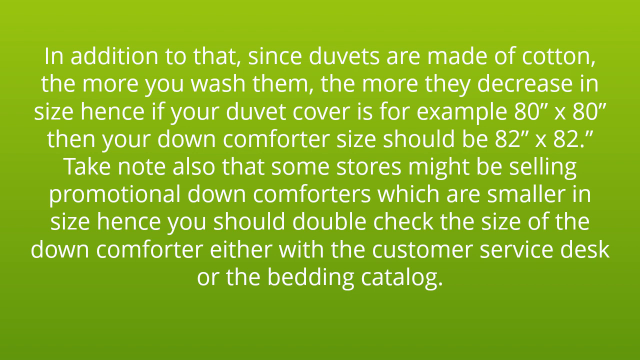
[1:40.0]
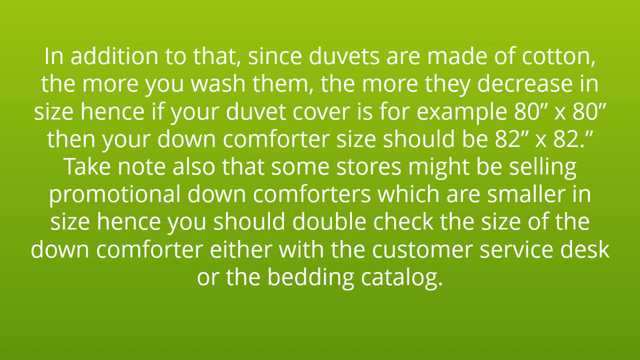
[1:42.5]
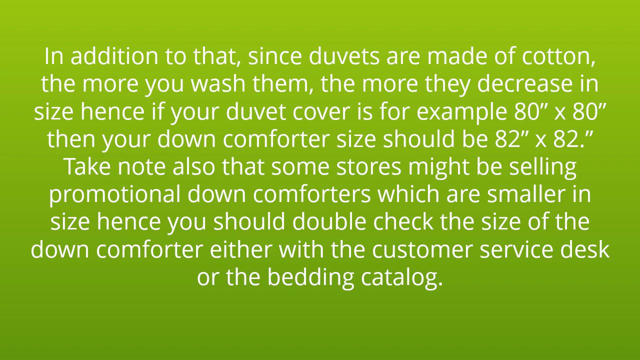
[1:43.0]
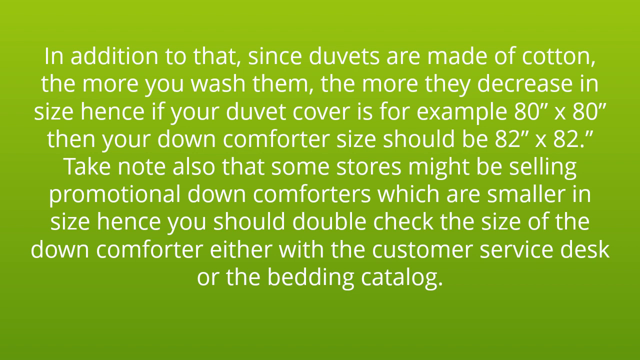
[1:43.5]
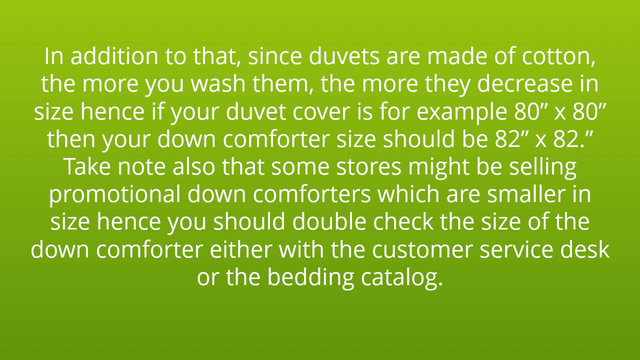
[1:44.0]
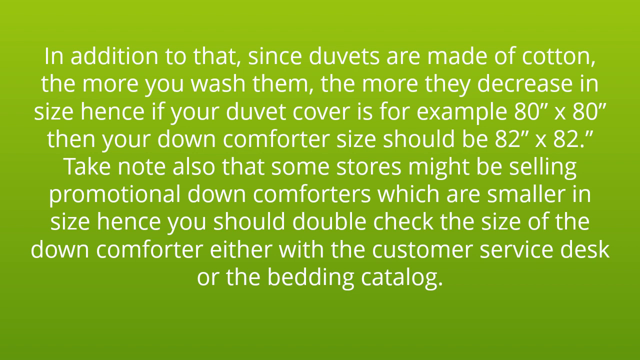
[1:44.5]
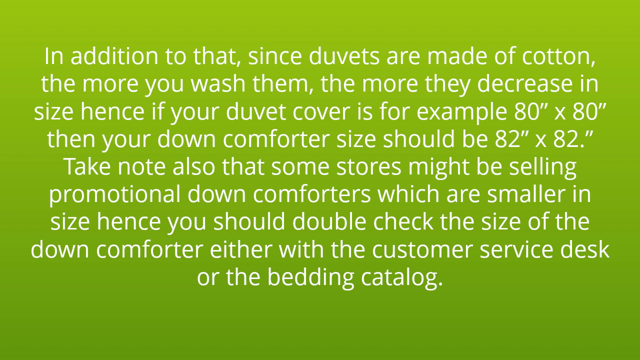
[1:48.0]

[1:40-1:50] Each slide of the down comforter ad is green with white writing. The slide reads: "In addition to that, since duvets are made of cotton, the more that you wash them, the more they decrease in size. If your duvet cover is, for example, 80 inches times 80 inches, then your down comforter size should be 82 by 82. Take note also that some stores might be selling promotional down comforters, which are smaller in size, hence you should double check the size of the down comforter, either with the customer service desk or the bedding catalog."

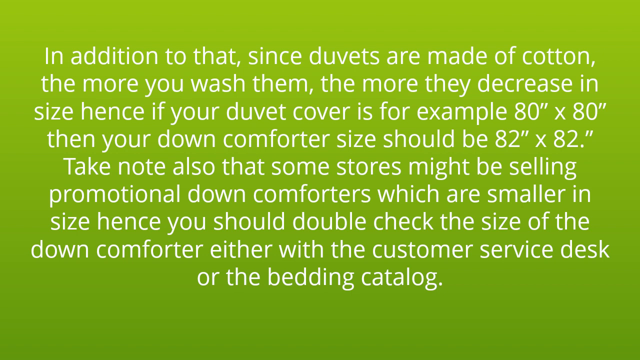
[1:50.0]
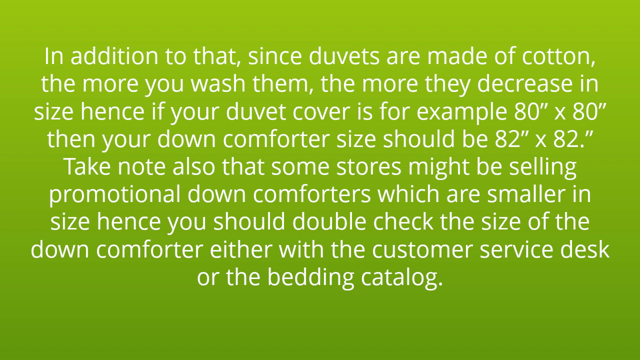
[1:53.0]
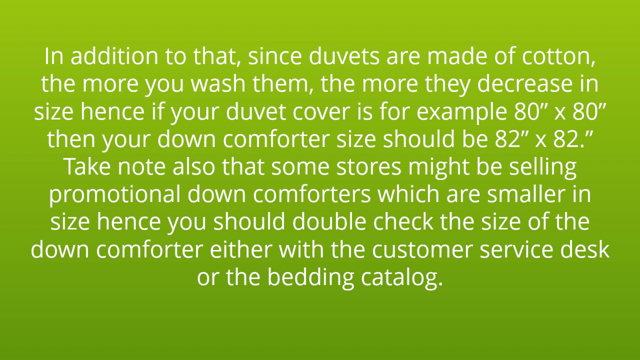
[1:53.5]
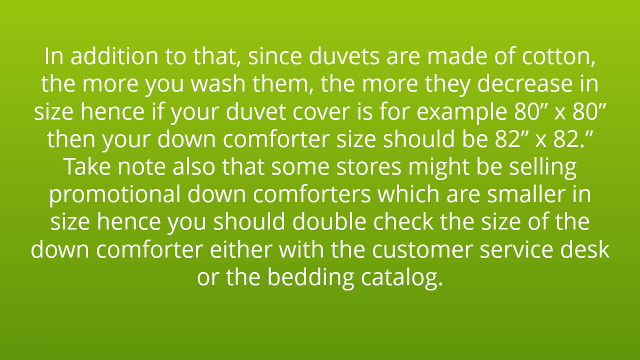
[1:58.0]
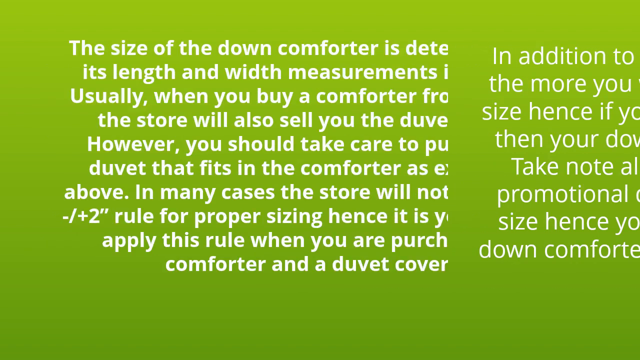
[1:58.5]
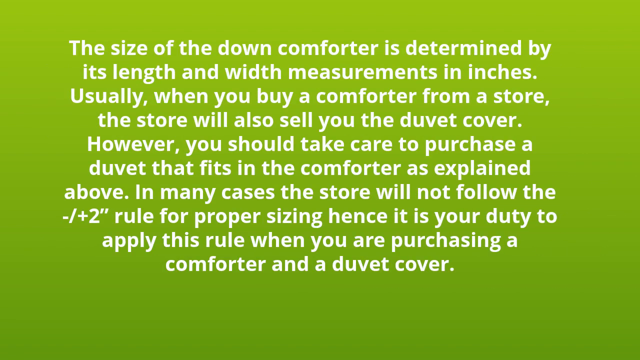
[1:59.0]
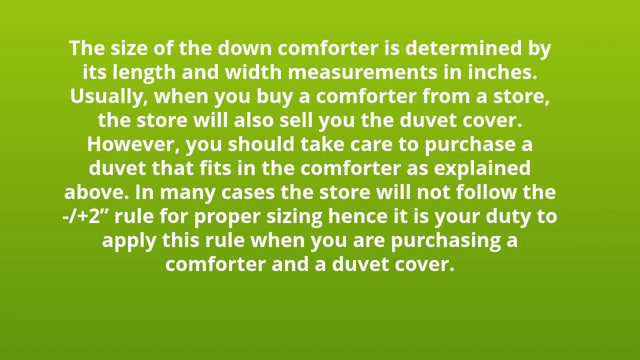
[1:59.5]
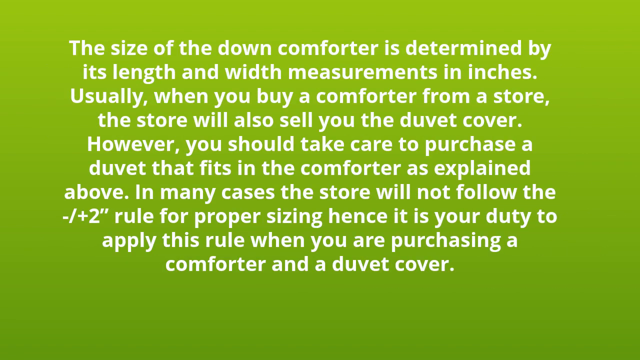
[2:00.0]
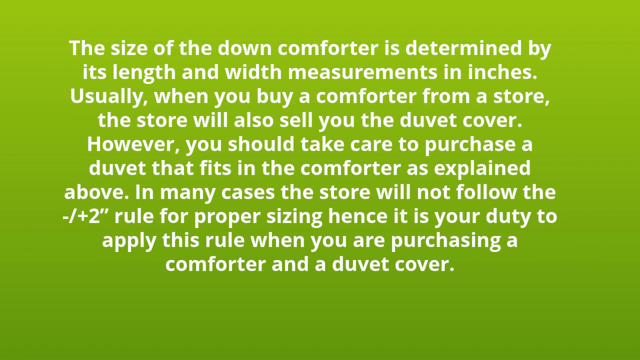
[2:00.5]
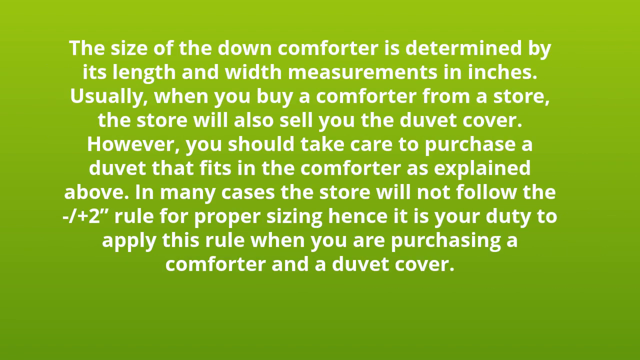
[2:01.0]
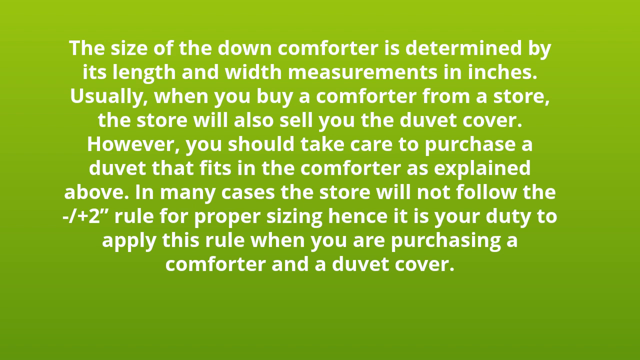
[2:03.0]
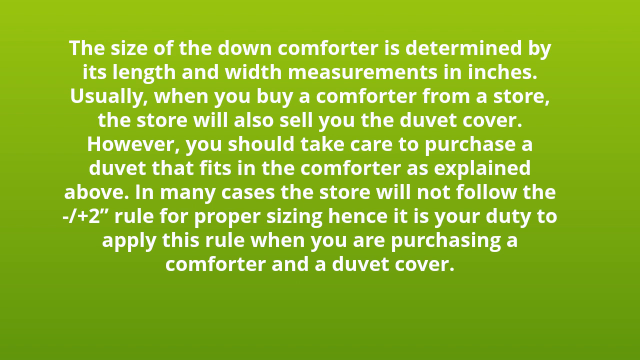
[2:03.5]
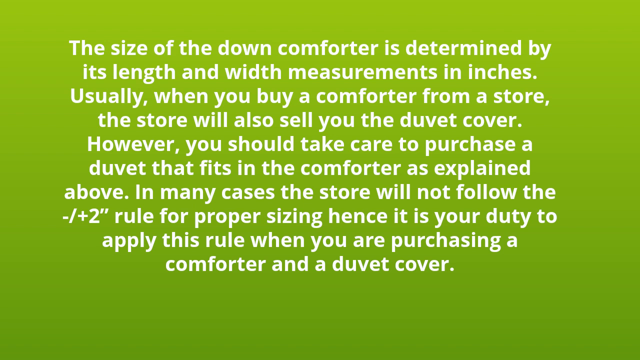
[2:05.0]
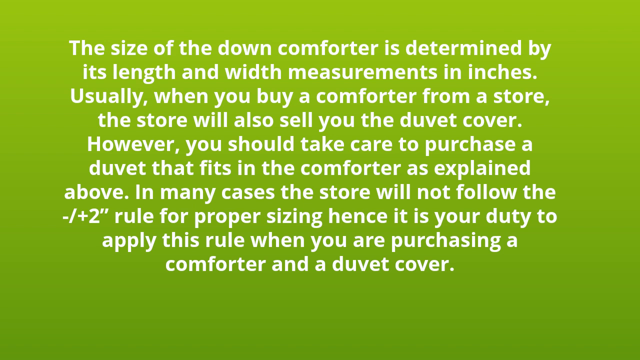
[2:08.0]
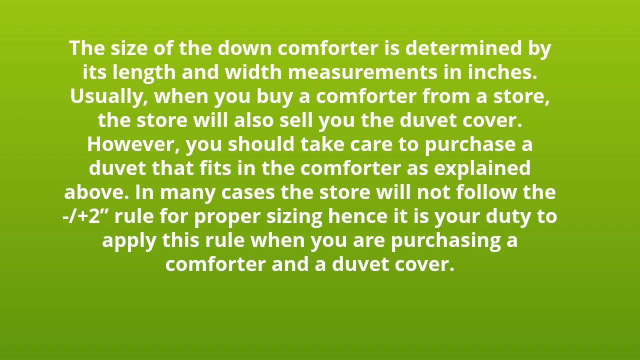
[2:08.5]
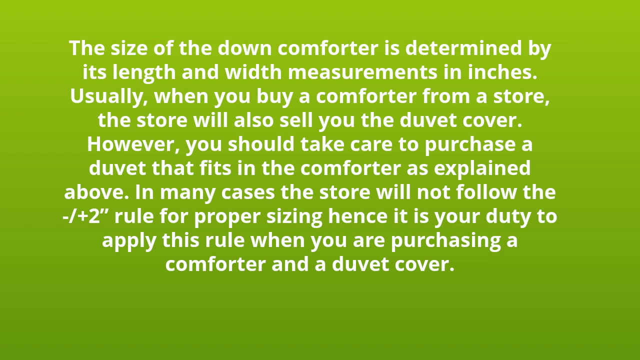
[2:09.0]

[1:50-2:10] The comforter ad continues with green slides whose words are very centered in the middle, almost like a title page. The slide reads: "In addition to that, since duvets are made of cotton, the more you wash them, the more they decrease in size. Hence, if your duvet cover is, for example, 80 inches by 80 inches, then your down comforter size should be 82 inches by 82 inches. Take note, also, some stores might be selling promotional down comforters, which are smaller in size. Hence, you should double check the size of the down comforter, either with the customer service desk or the bedding catalog." The slide then changes by moving off to the right, revealing a new slide: "The size of the down comforter is determined by its length and width measurements in inches. Usually, when you buy a comforter from a store, the store will also sell you the duvet cover. However, you should take care to purchase a duvet that fits in the comforter, as explained above. In many cases, the store will not follow the negative / plus 2 inches rule for proper sizing. Hence, it is your duty to apply this rule when you are purchasing a comforter and a duvet cover."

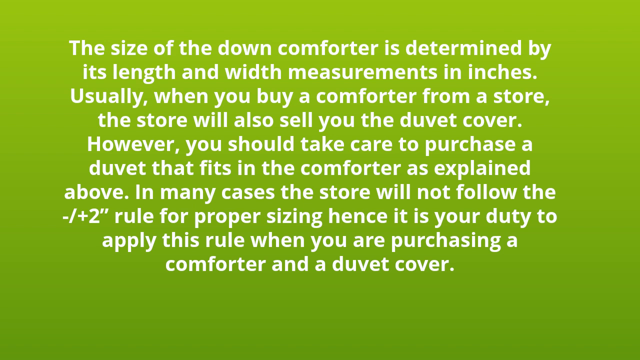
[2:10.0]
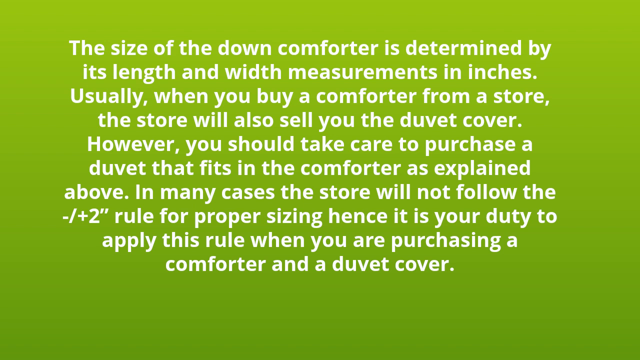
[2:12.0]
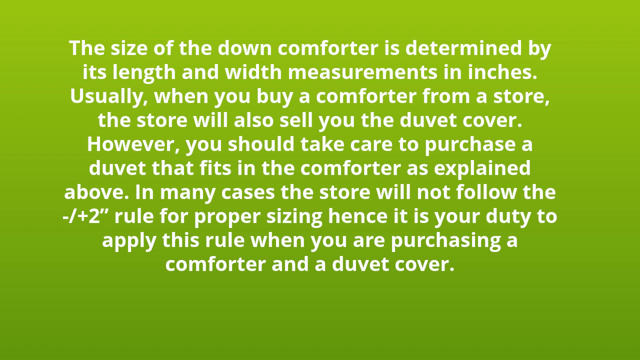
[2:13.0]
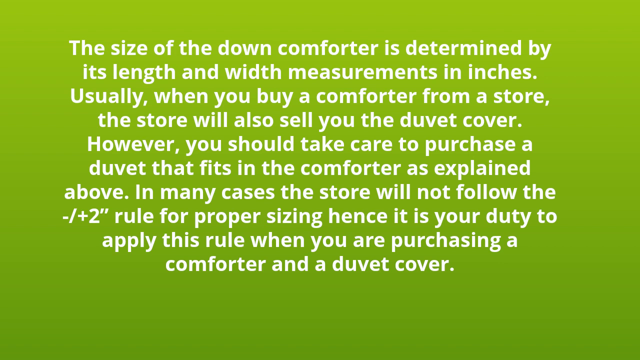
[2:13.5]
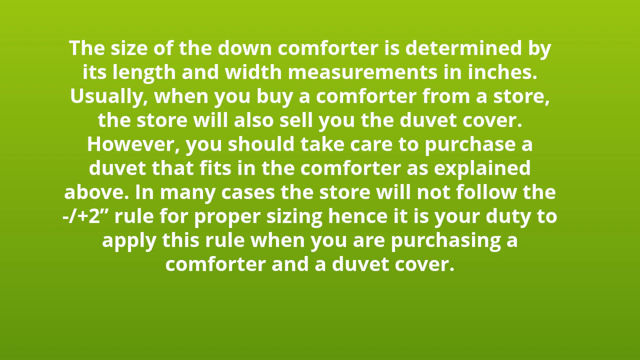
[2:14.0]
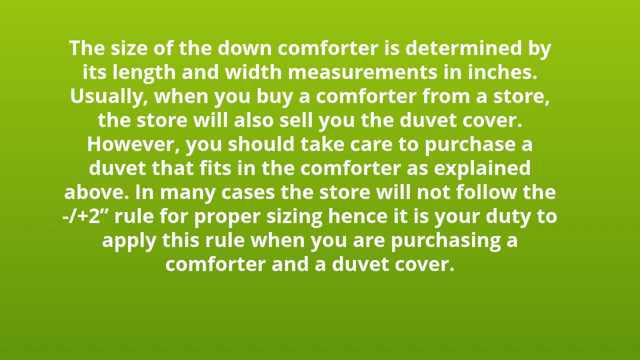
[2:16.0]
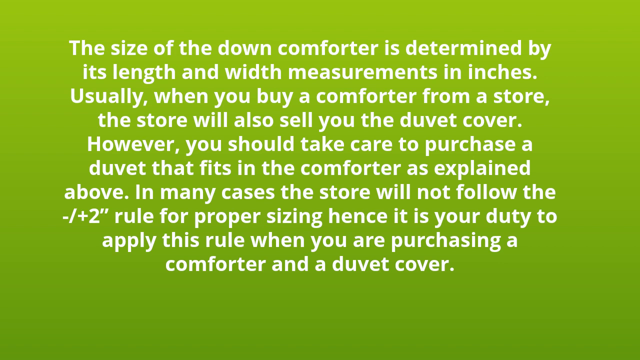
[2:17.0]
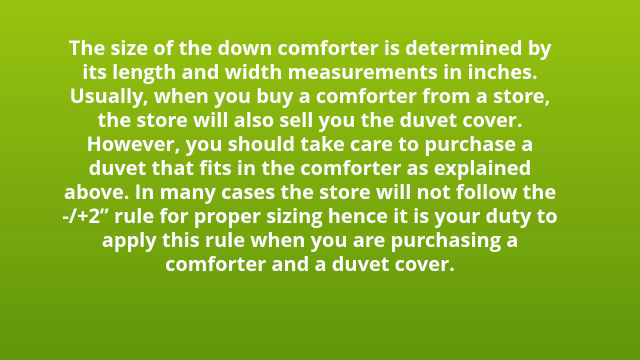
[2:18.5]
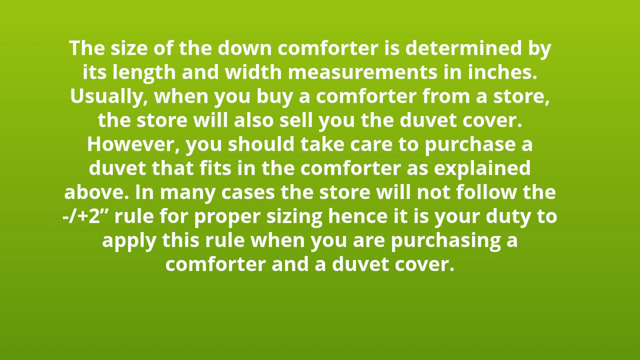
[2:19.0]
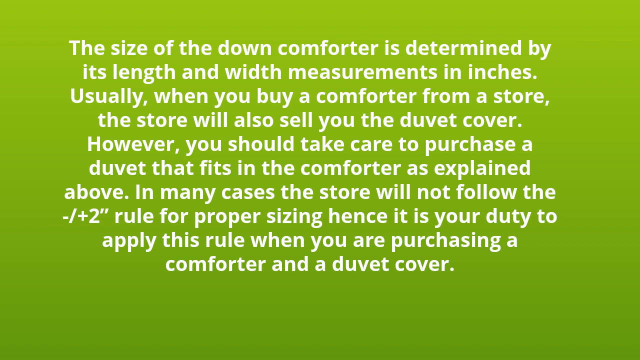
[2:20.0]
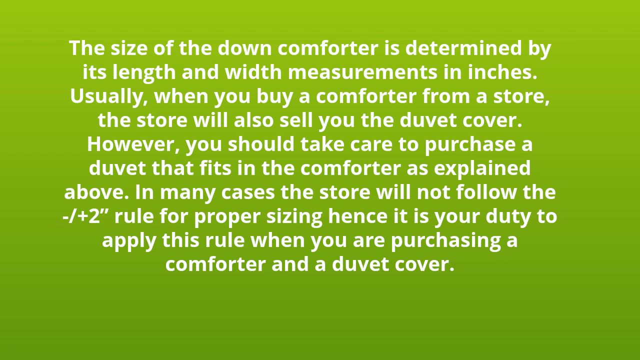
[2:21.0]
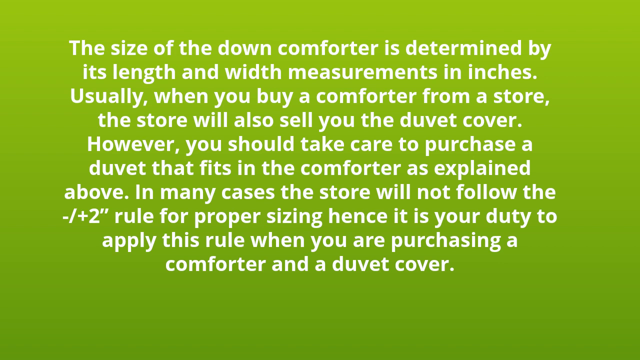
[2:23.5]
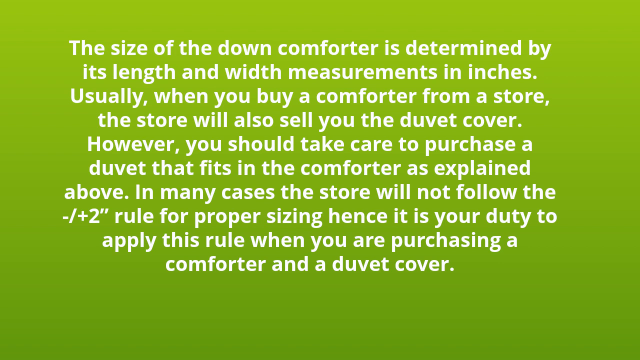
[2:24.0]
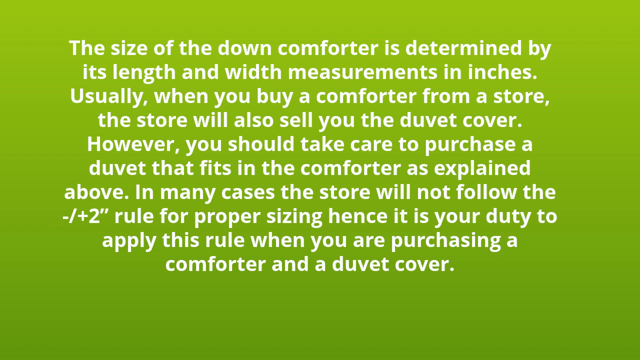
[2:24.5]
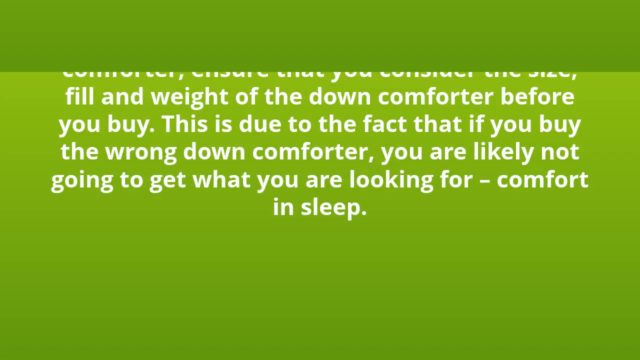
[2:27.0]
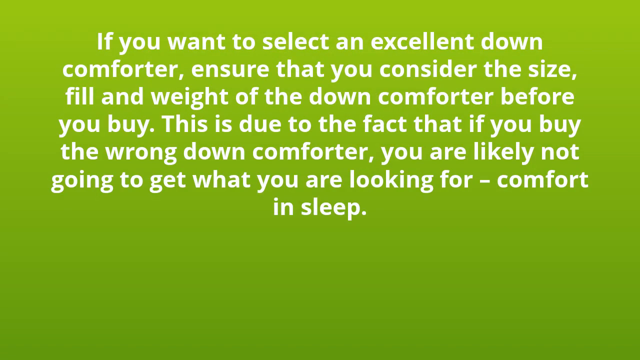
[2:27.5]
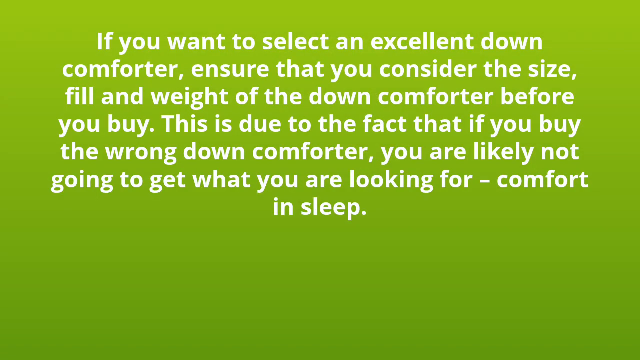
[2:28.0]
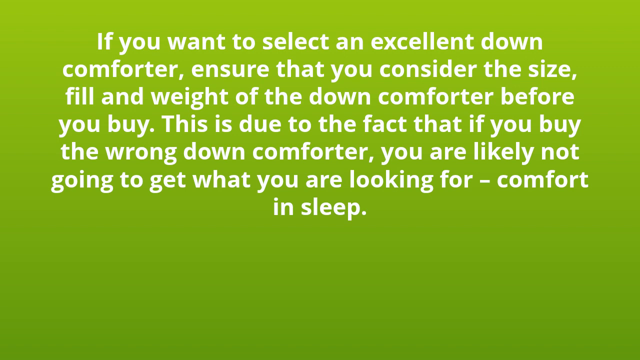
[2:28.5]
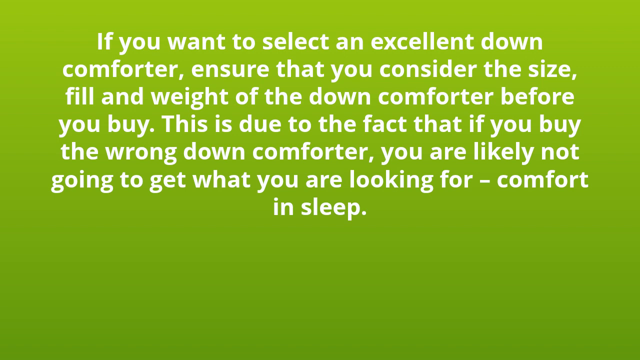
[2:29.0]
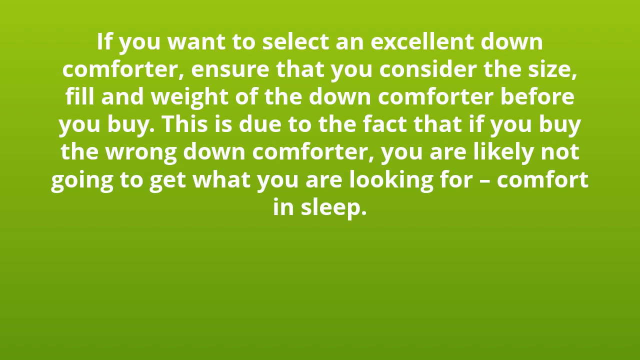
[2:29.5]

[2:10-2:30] The down comforter ad shows green slides with white writing. The slide reads: "The size of the down comforter is determined by its length and width measurements in inches. Usually when you buy a comforter from a store, the store will also sell you the duvet cover. However, you should take care to purchase a duvet that fits in the comforter as explained above. In many cases, the store will not follow the negative / plus two inch rule for proper sizing. Hence, it is your duty to apply this rule when you are purchasing a comforter and a duvet cover." The next slide reads: "If you want to select an excellent down comforter, ensure that you consider the size, fill, and weight of the down comforter before you buy. This is due to the fact that if you buy the wrong down comforter, you are likely not going to get what you are looking for. Comfort in sleep."